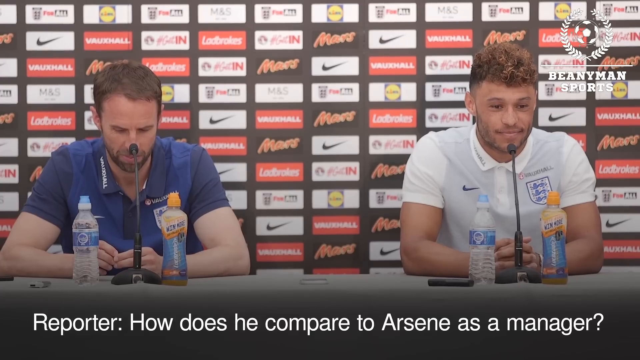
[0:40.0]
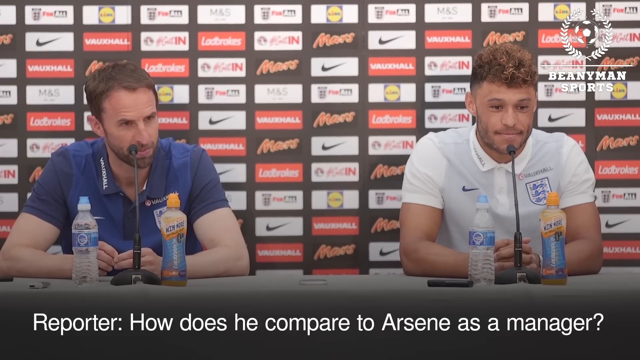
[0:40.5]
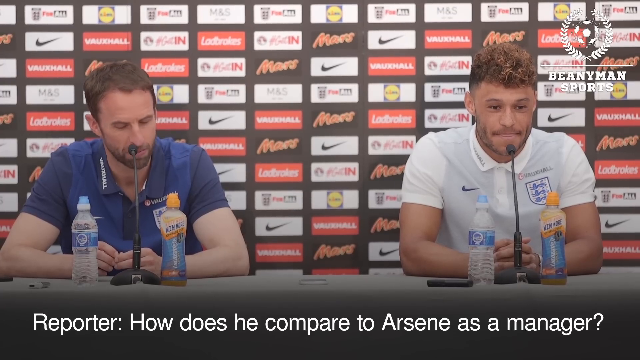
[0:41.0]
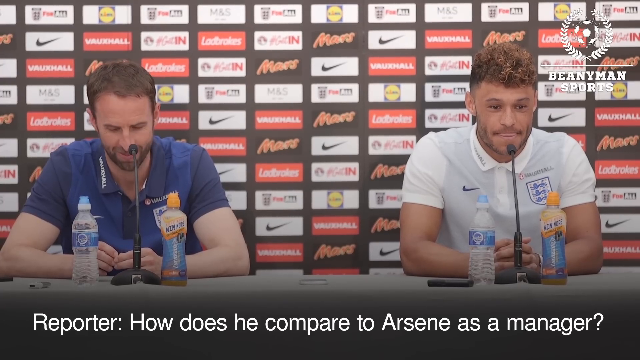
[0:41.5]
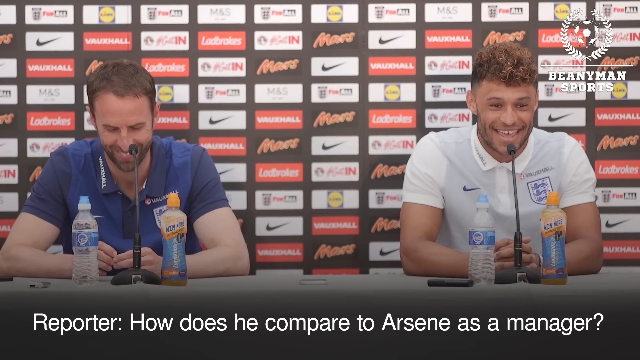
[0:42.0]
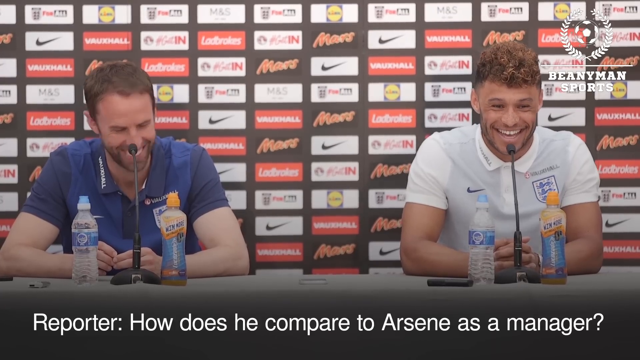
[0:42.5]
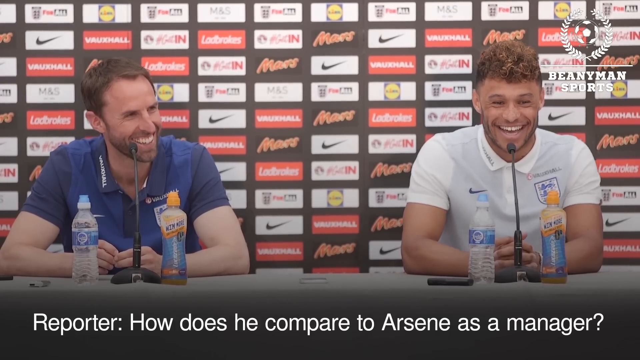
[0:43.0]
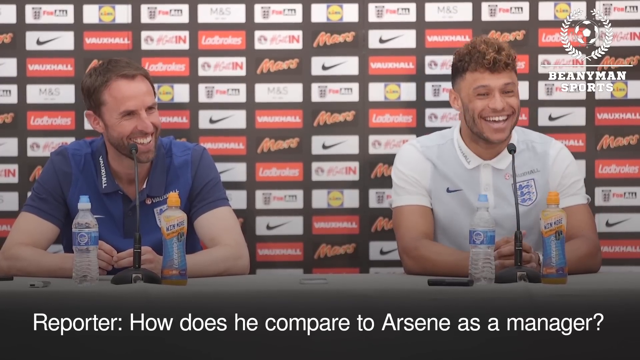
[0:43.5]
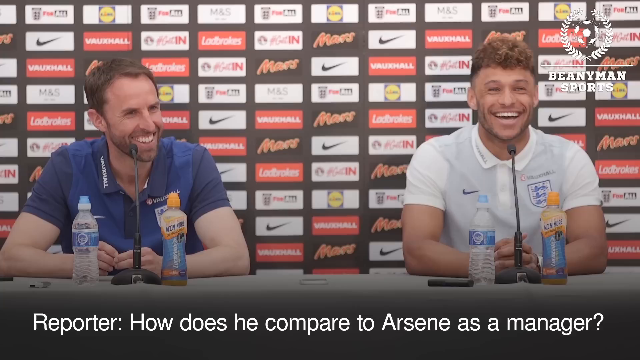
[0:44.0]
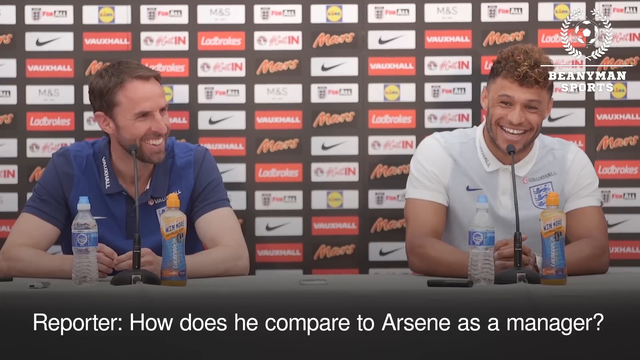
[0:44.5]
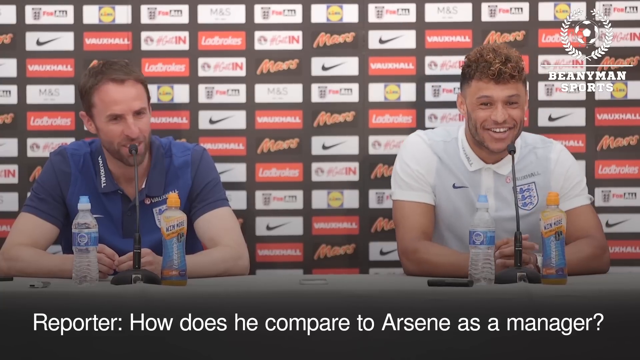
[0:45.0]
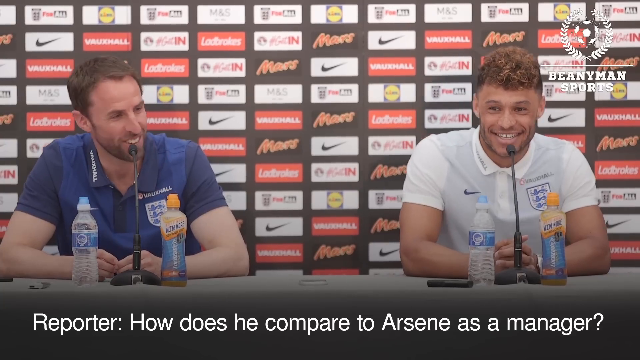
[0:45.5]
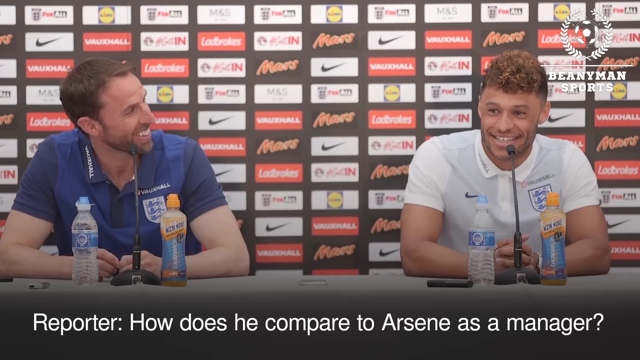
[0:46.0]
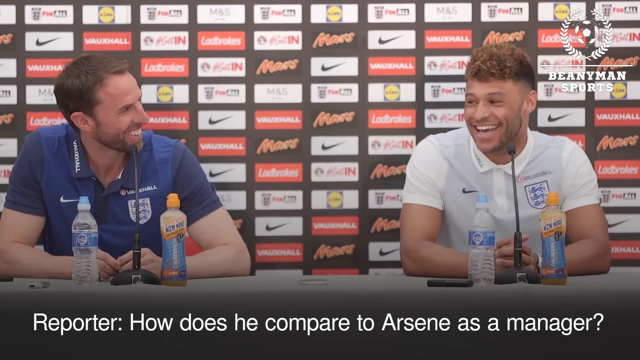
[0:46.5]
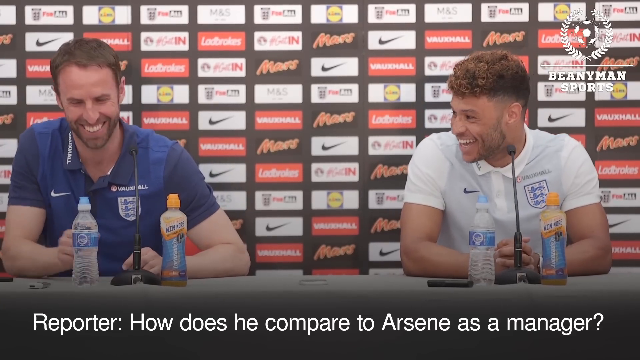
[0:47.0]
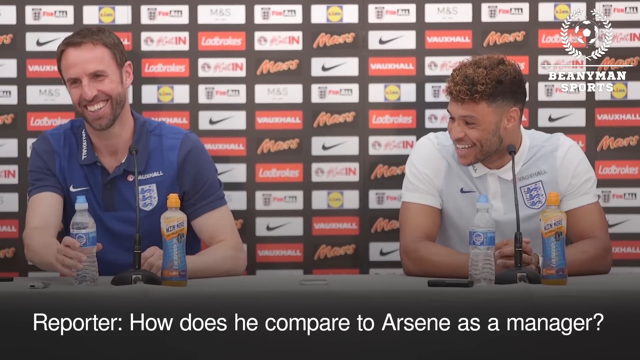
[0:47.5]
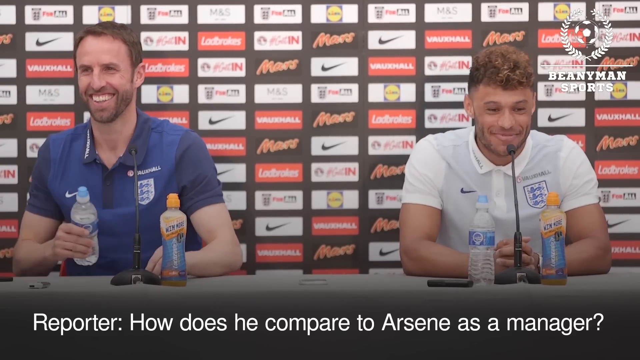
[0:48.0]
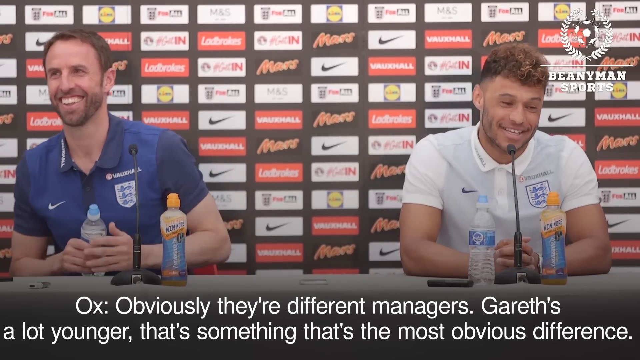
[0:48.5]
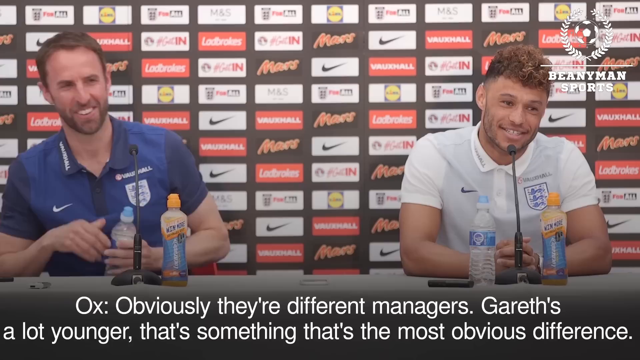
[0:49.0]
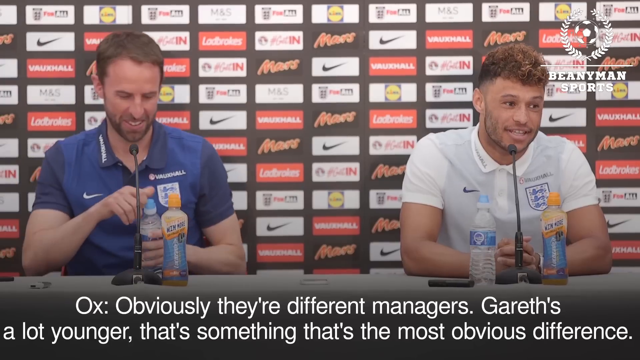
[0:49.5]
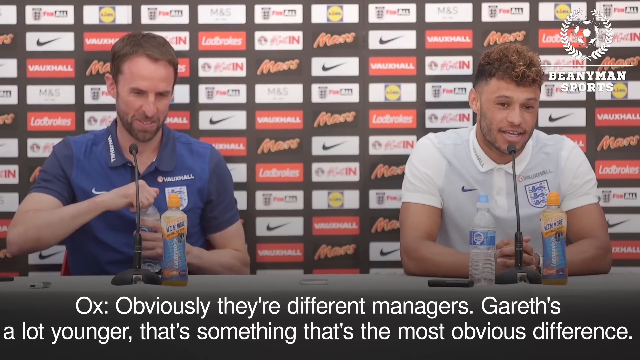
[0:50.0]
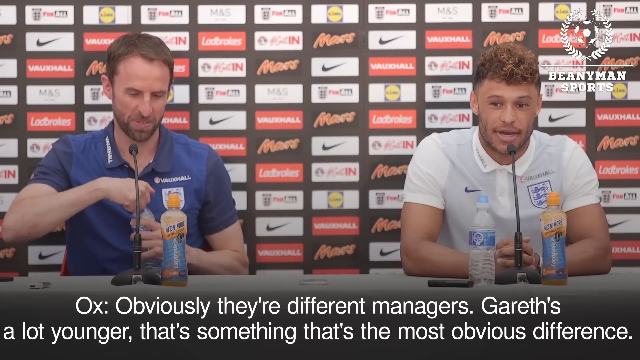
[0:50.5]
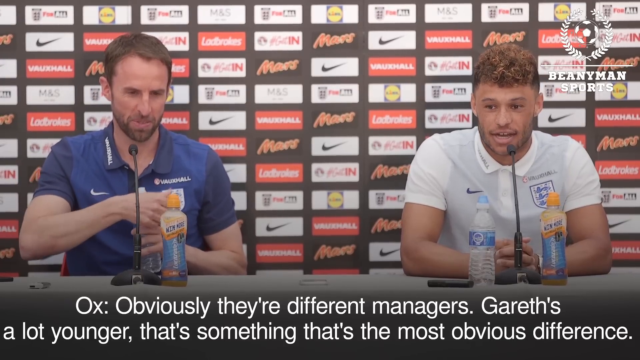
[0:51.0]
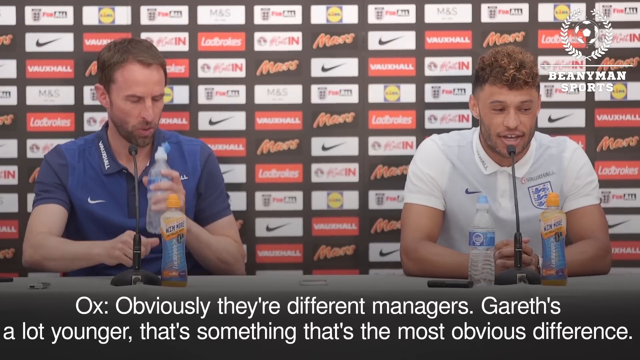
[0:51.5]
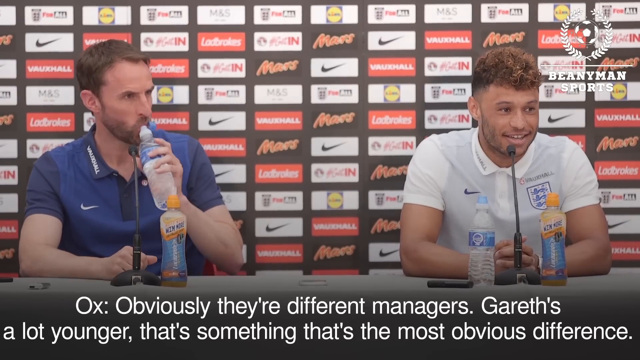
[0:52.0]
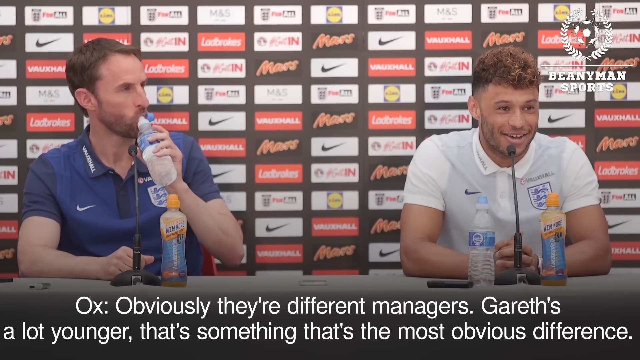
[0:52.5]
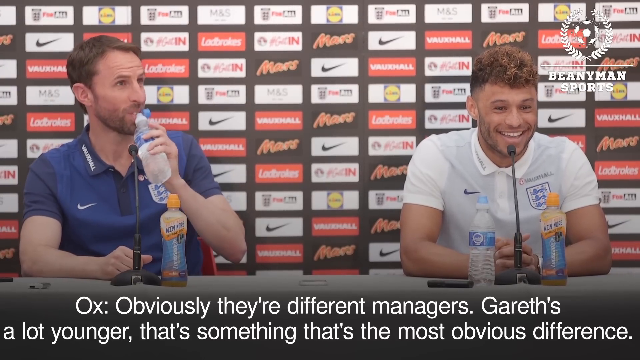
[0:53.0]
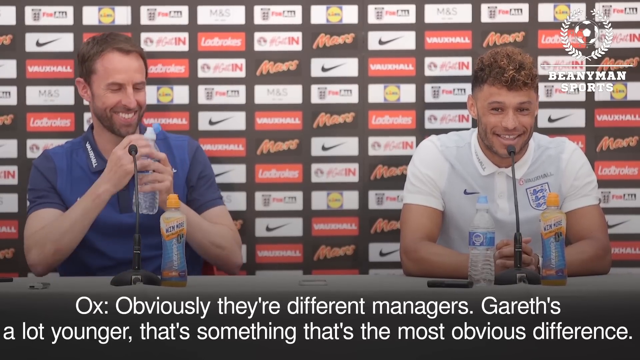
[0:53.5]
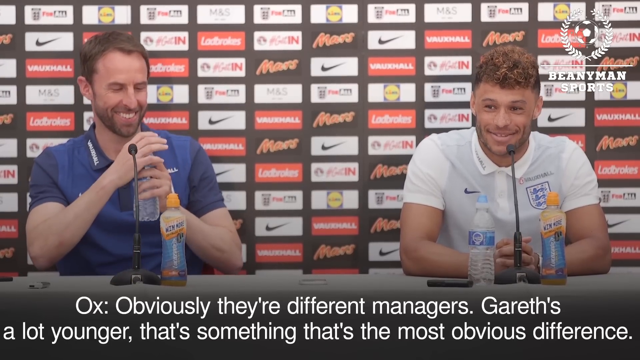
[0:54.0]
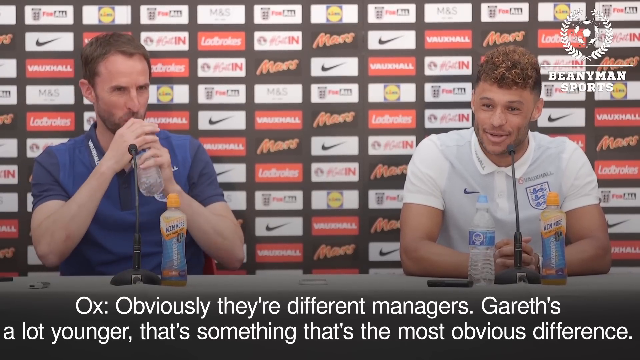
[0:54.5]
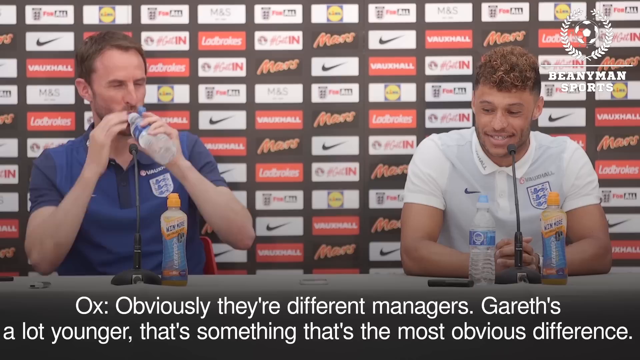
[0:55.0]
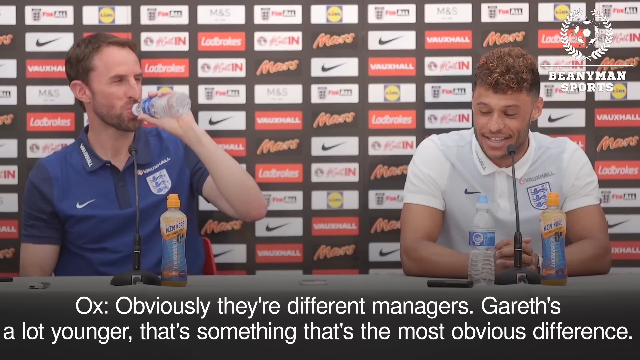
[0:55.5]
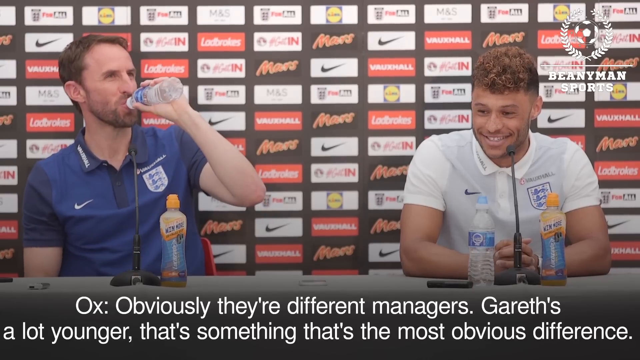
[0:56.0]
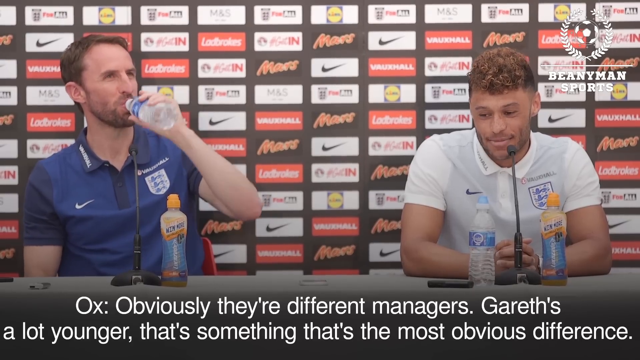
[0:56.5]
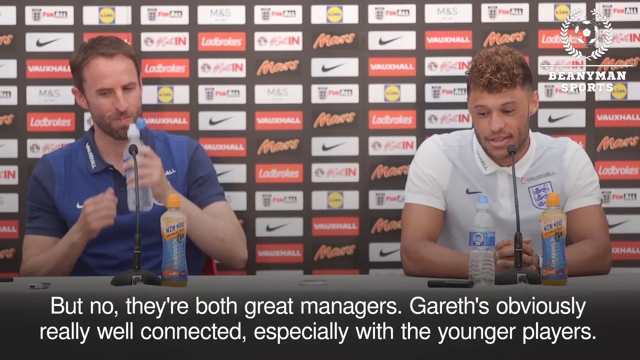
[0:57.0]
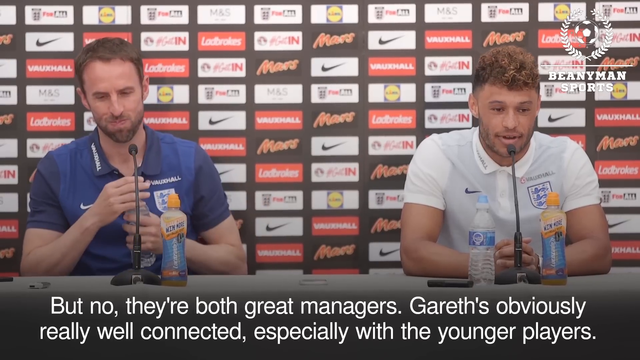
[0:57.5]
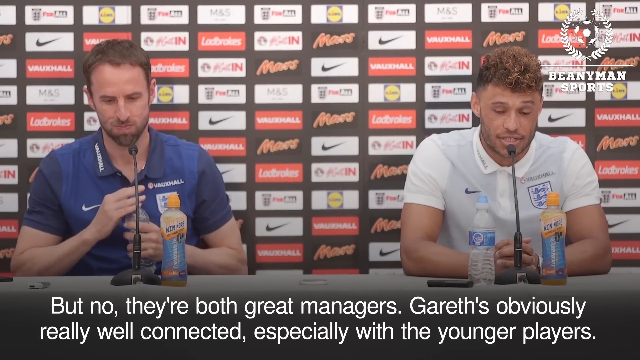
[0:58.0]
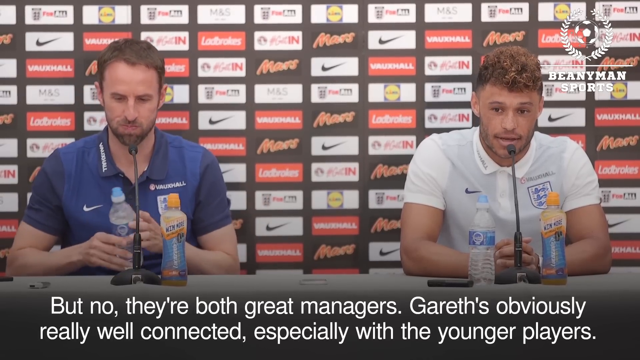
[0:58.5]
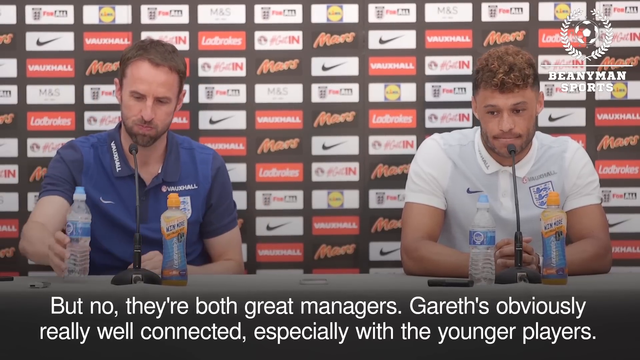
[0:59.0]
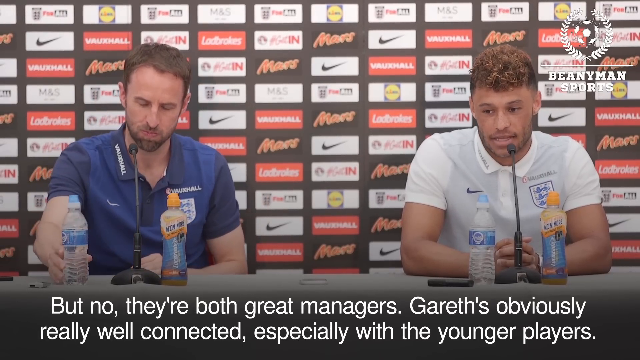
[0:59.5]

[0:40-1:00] The Beany Man Sports press conference continues with a player from an English soccer team on the right side of the screen in a white shirt and his manager on the left side in a blue shirt. Both are team shirts, with a team logo on, apparently, the left side and the Nike emblem on the right side. Behind them are a lot of sponsor advertisements in rectangular shapes with sashing between each one, looking kind of like stacked bricks. A reporter asks the player how he compares to Arsene as a manager, and both men start laughing. The man on the right side, the manager, picks up a water bottle with his left hand, moves it into his right hand, takes a sip of water, and puts it back down in front of him, in front of the microphone on the table where the press conference is taking place.